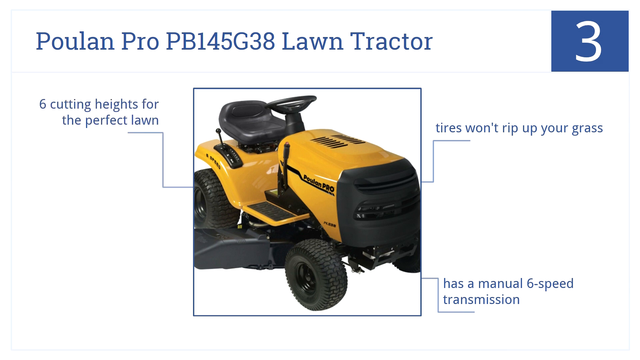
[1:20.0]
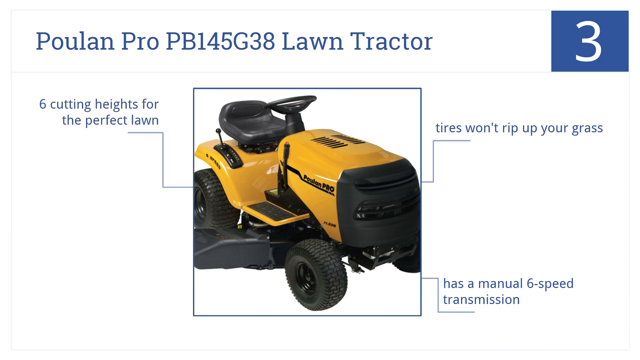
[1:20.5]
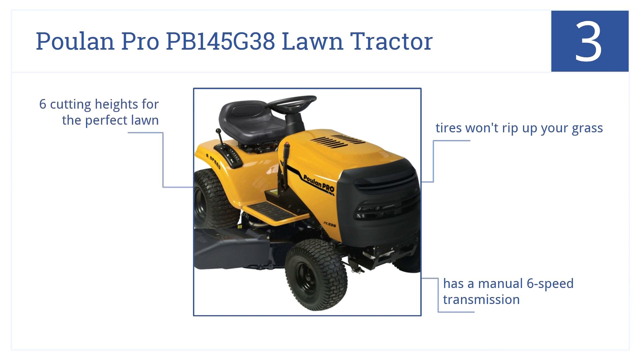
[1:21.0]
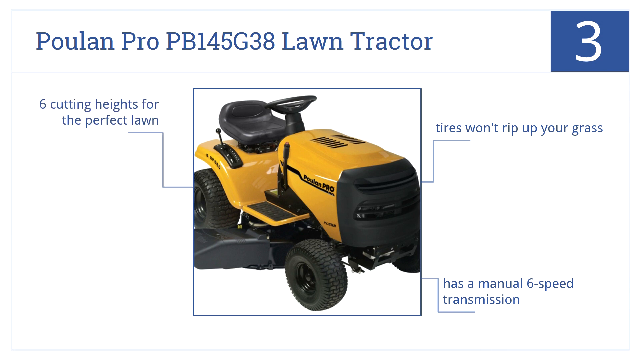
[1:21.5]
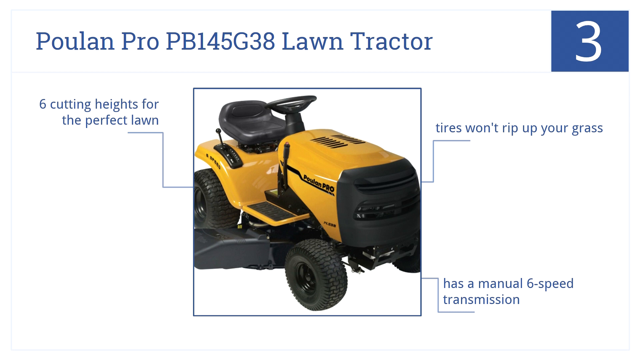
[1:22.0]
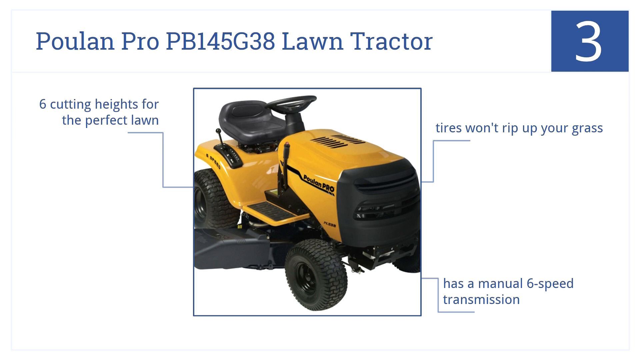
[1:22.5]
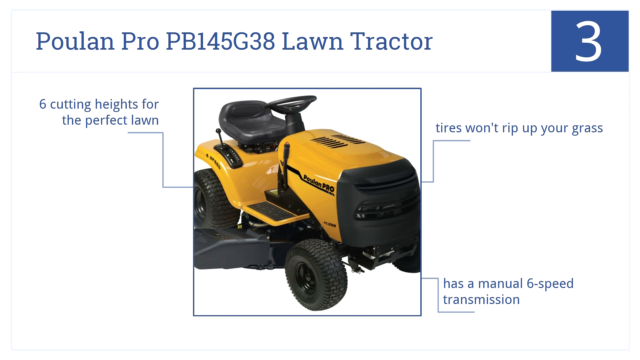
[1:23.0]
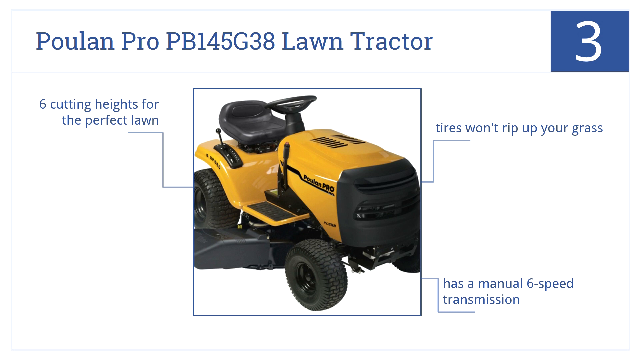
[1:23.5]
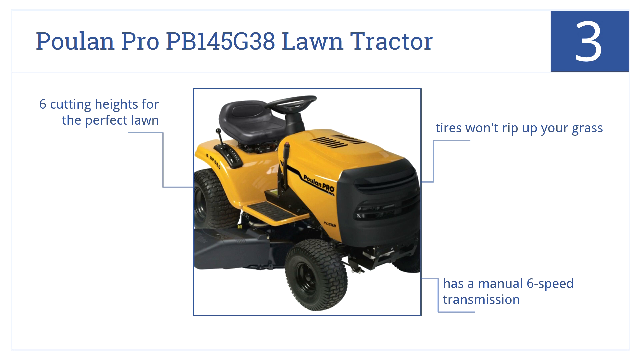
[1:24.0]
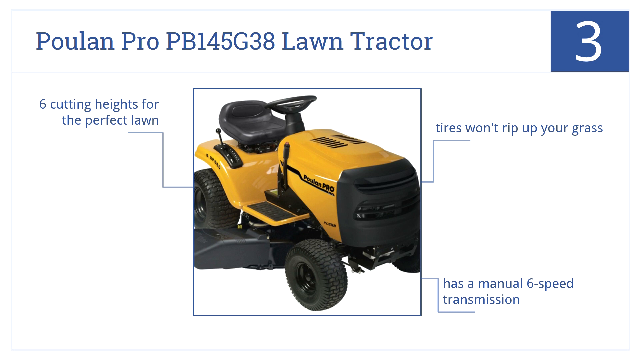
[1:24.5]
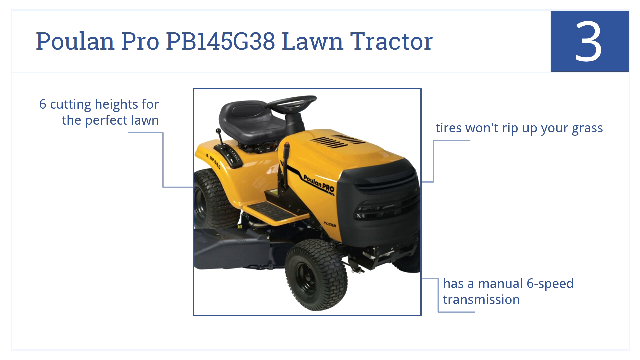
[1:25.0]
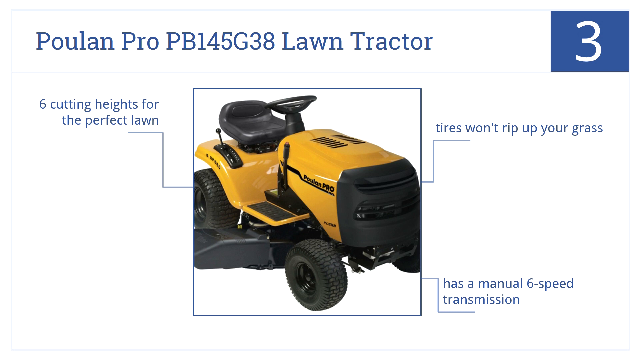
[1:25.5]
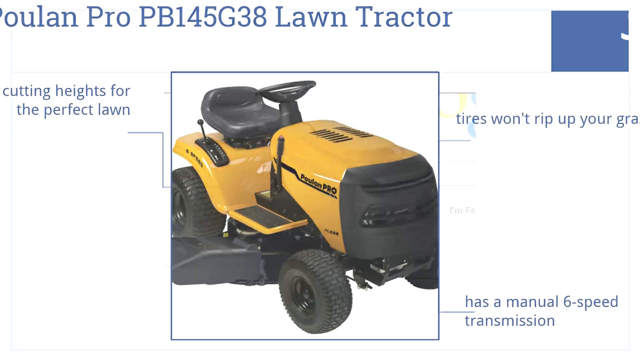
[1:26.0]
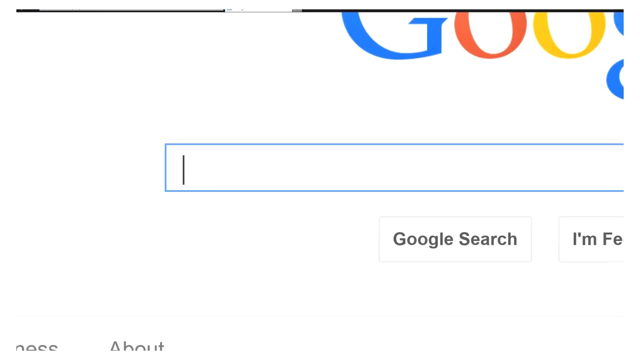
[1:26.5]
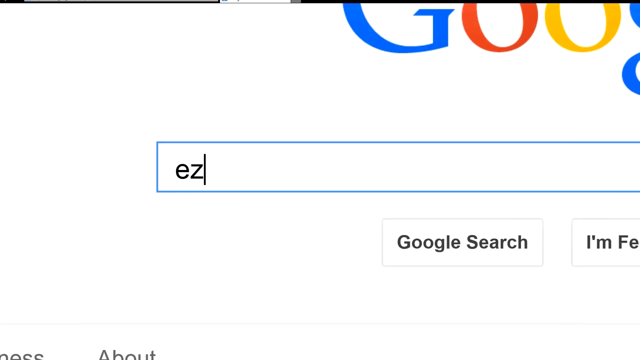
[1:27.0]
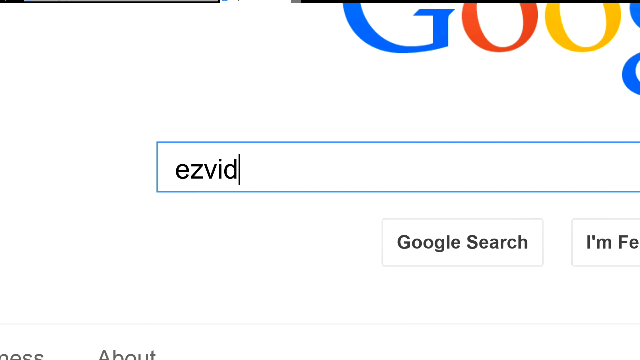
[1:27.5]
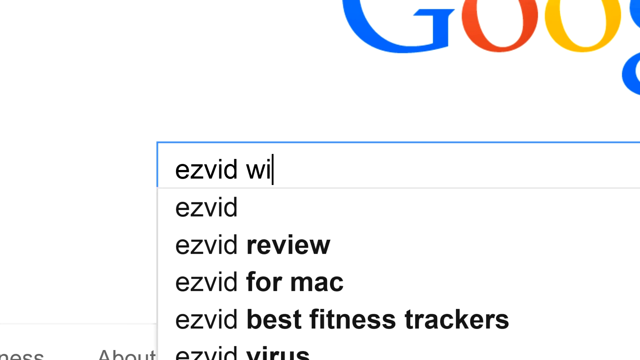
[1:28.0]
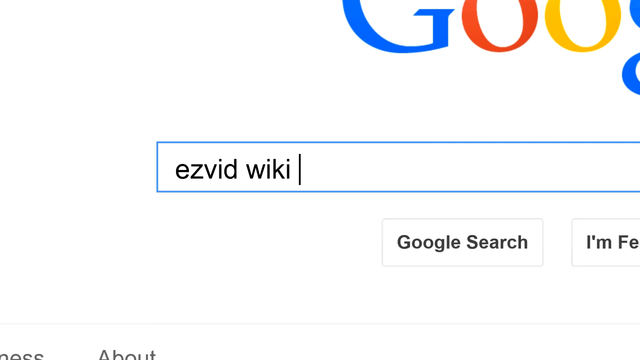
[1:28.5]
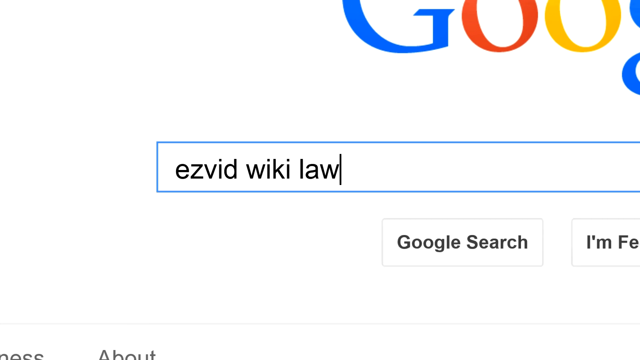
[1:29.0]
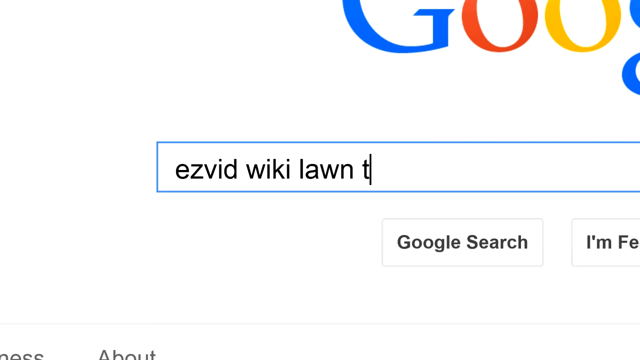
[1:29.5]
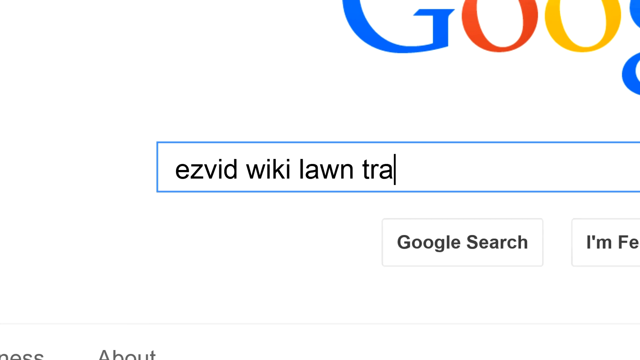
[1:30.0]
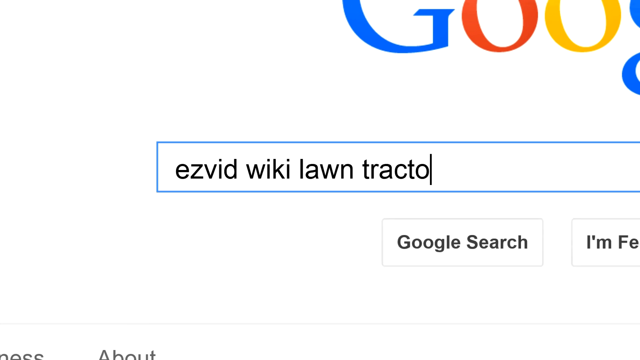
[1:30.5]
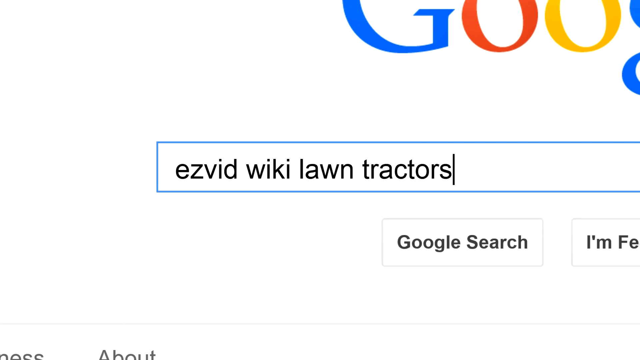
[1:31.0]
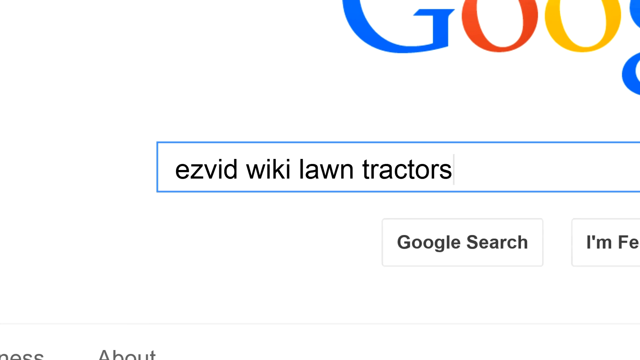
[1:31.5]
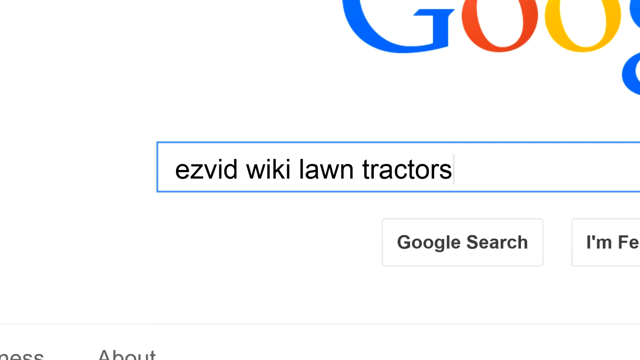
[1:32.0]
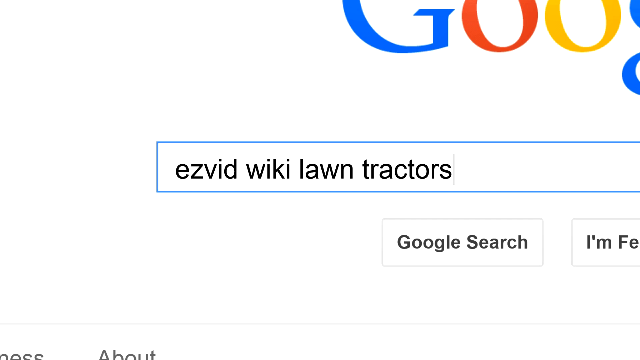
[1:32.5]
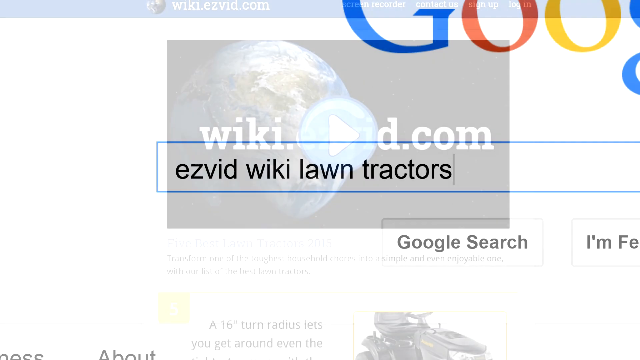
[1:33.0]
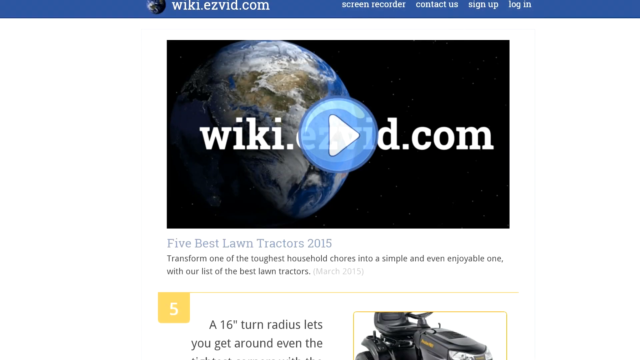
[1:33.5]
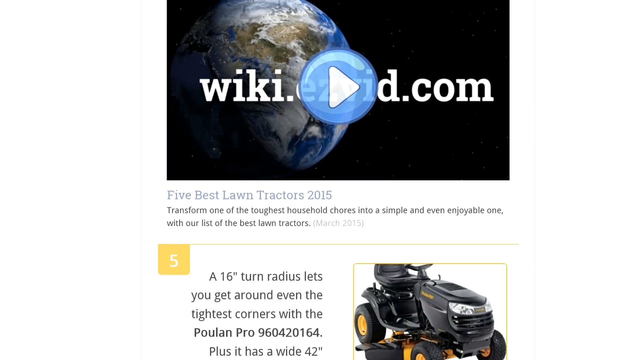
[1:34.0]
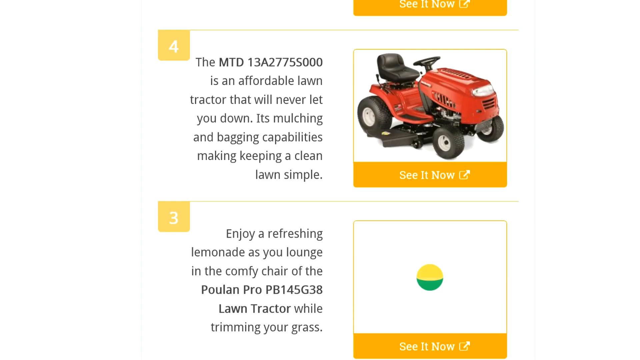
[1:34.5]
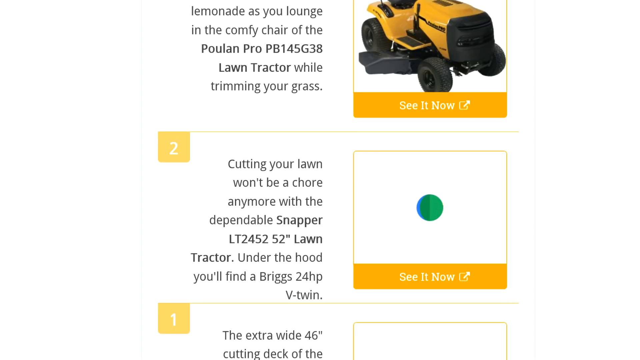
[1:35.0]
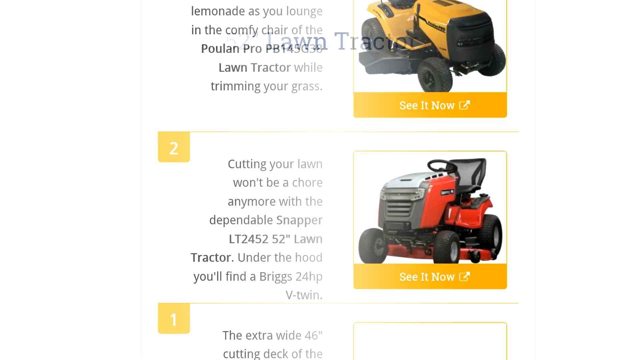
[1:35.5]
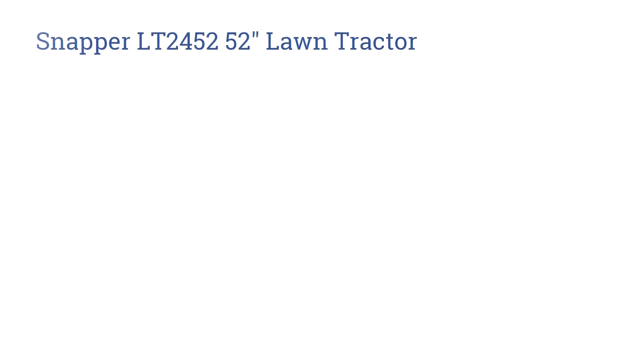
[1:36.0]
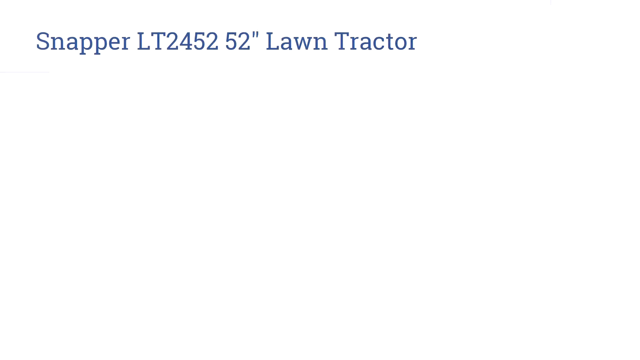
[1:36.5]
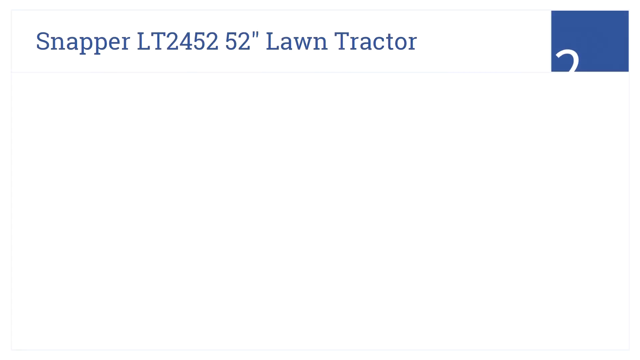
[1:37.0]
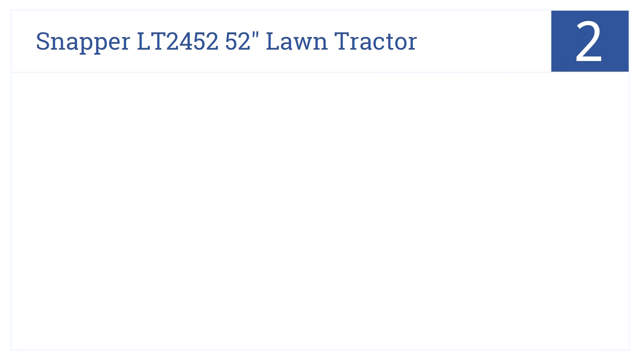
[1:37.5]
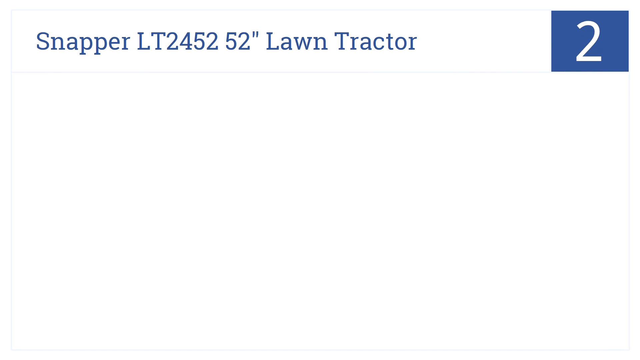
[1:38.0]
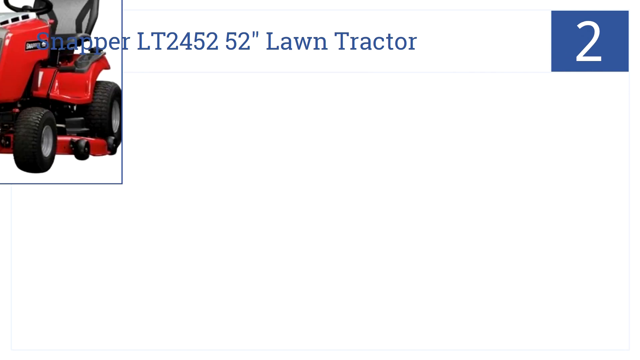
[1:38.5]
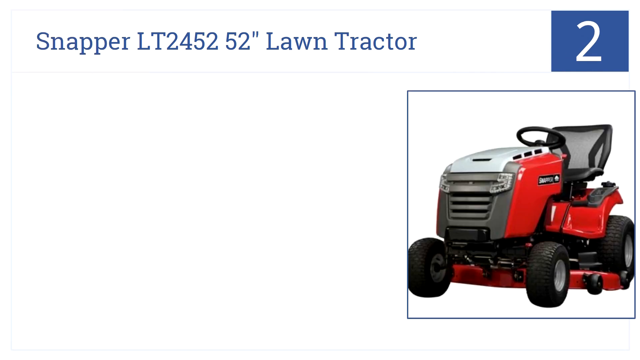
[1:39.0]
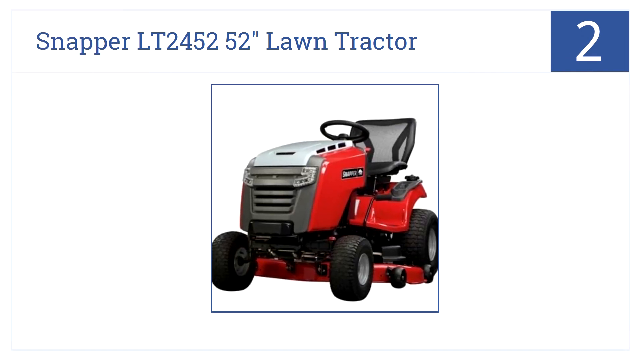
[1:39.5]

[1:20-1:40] The yellow tractor is shown with blue text around it and arrows pointing to different sections, a logo on the top right with a white 3 on blue, and blue text on the top left reading "Poulan Pro" with numbers and letters falling behind it, followed by the words "lawn tractor." This remains on screen until a transition effect reveals a Google search. The Google logo is on the top right, and "ezvid wiki lawn tractors" is typed into the text box. A website appears with an image of an earth and multiple images of different tractors, including the black and red ones already seen, with information in black text beside them. The page scrolls down through the different tractors. After a transition, new text appears reading "Snapper LT" with numbers, followed by "Lawn Tractor." A new logo with a white number 2 appears on the top right, and a red tractor, larger than the previous ones, comes down from the top of the screen.